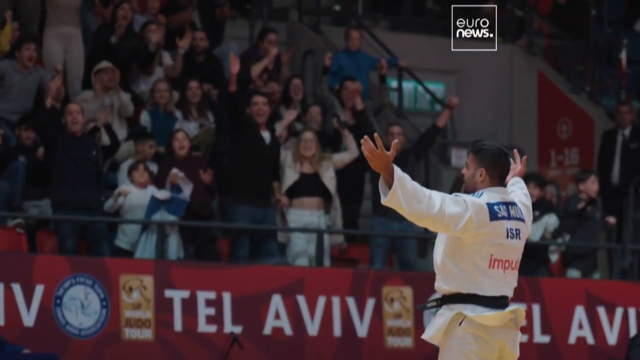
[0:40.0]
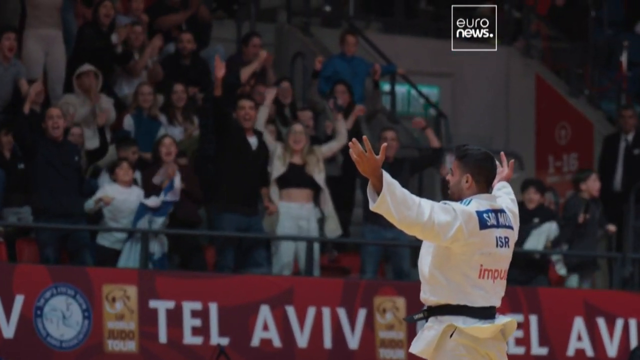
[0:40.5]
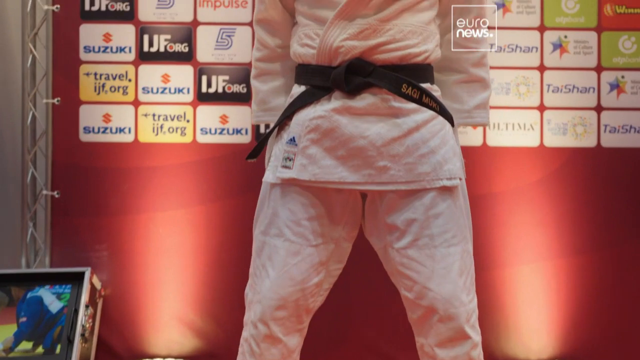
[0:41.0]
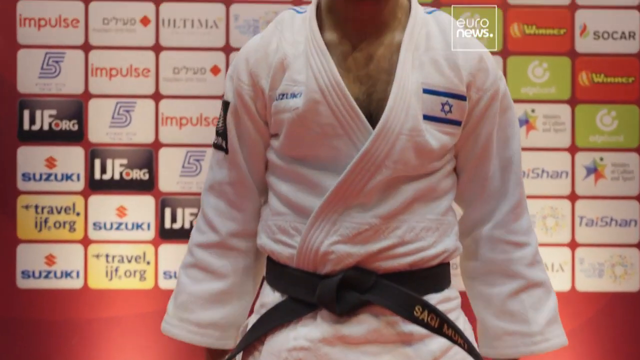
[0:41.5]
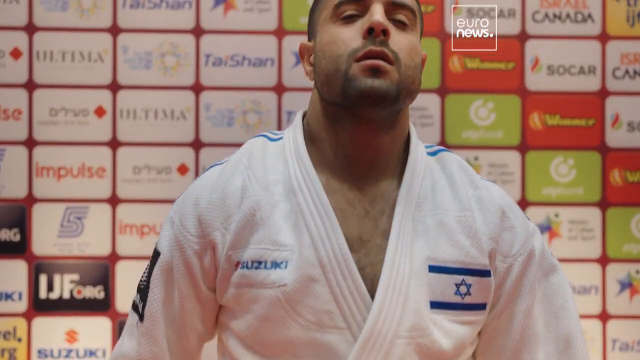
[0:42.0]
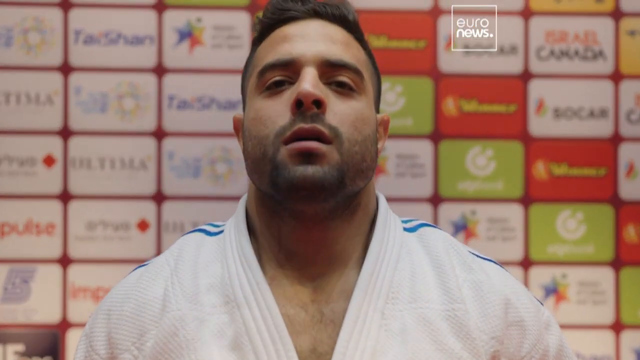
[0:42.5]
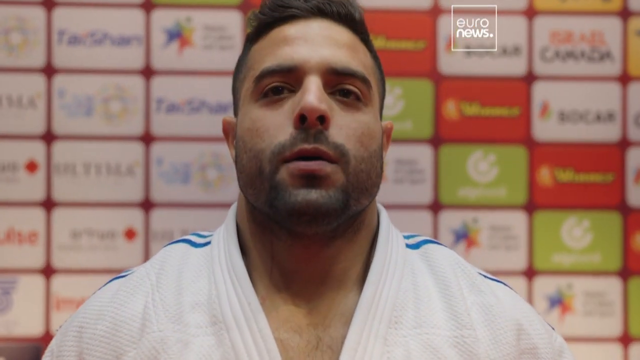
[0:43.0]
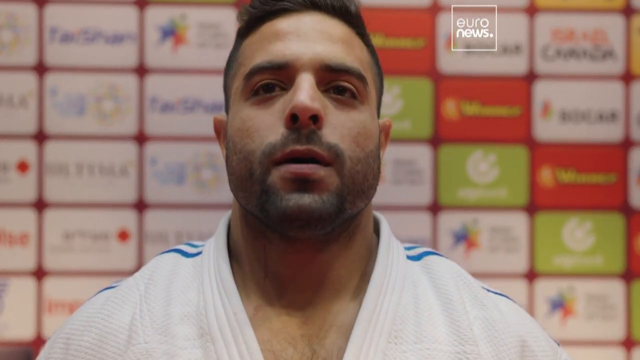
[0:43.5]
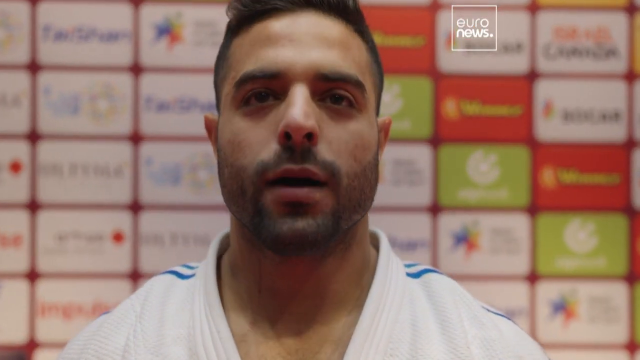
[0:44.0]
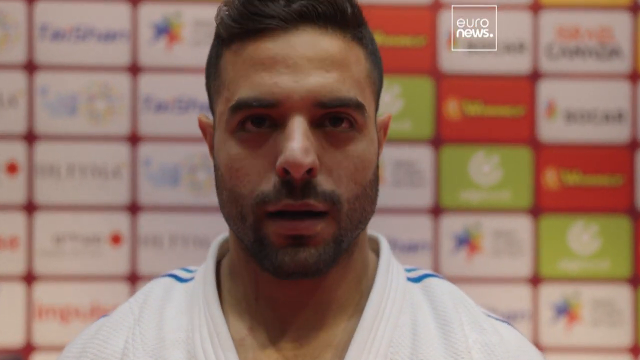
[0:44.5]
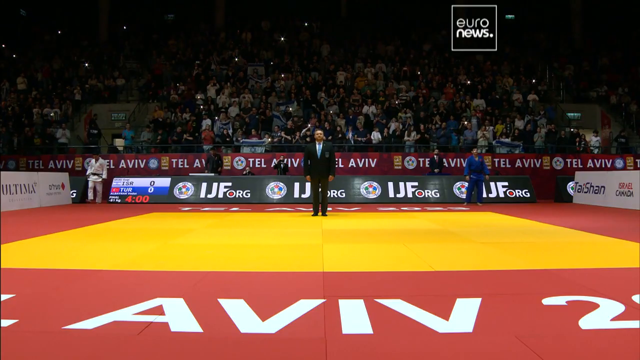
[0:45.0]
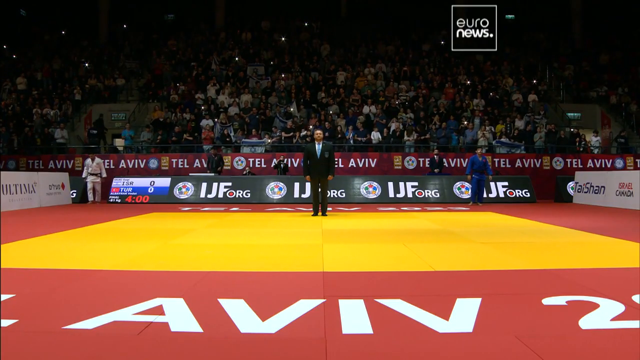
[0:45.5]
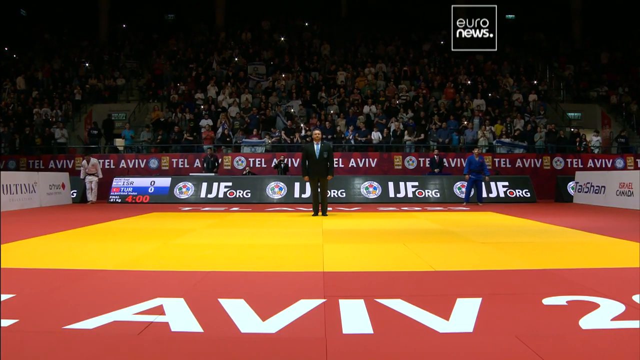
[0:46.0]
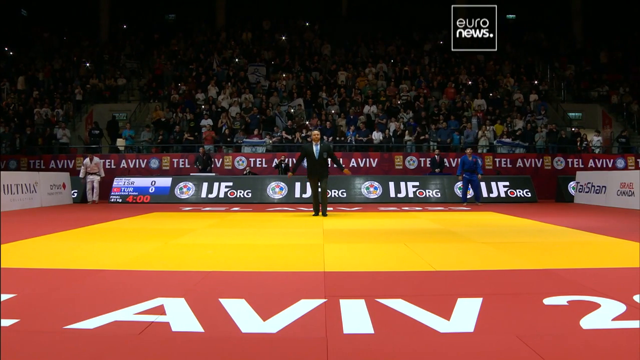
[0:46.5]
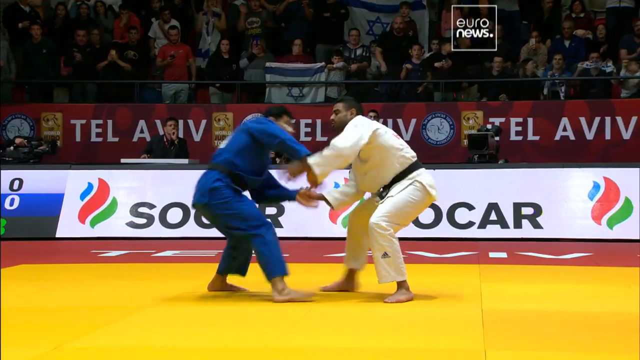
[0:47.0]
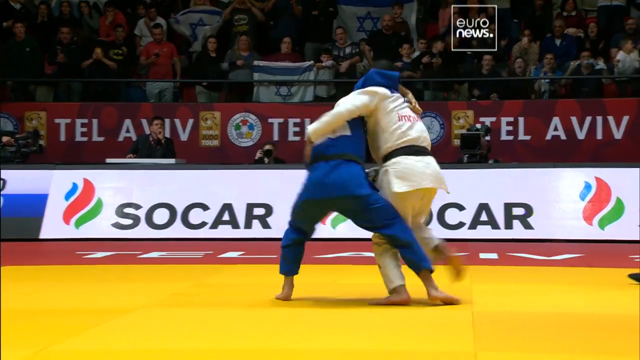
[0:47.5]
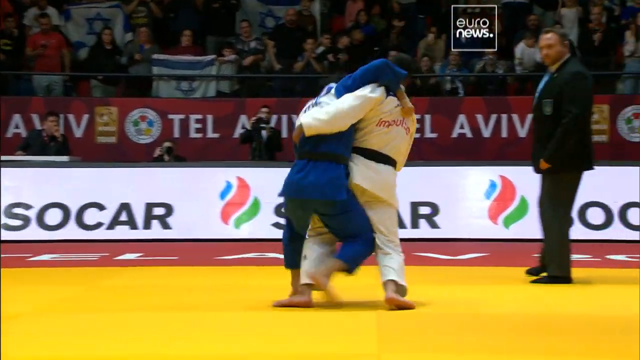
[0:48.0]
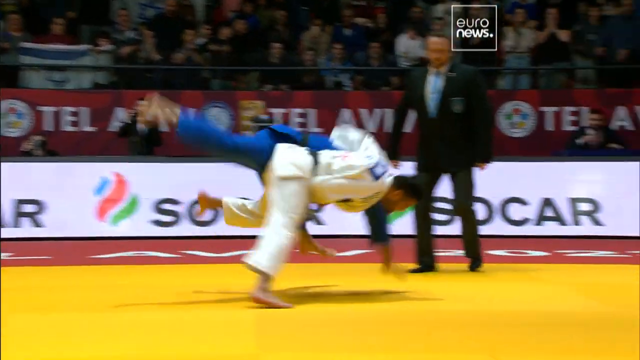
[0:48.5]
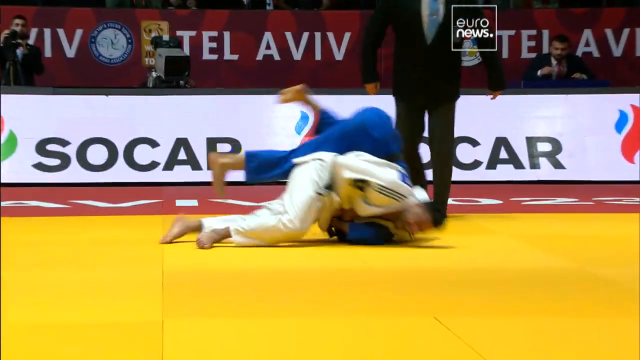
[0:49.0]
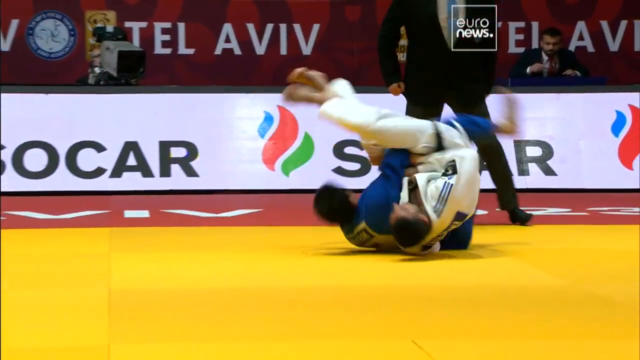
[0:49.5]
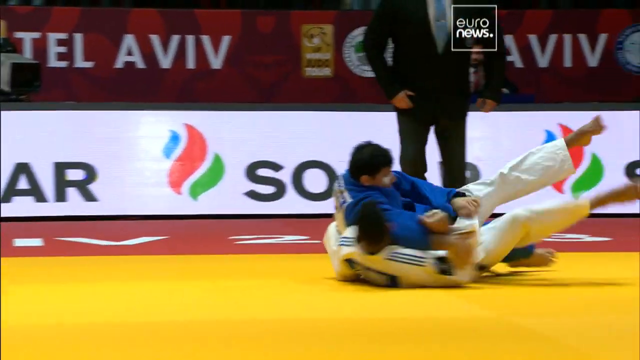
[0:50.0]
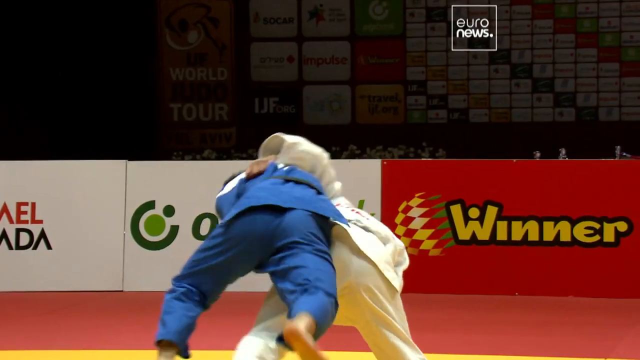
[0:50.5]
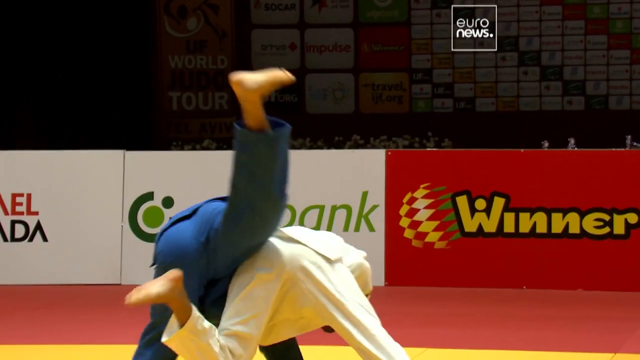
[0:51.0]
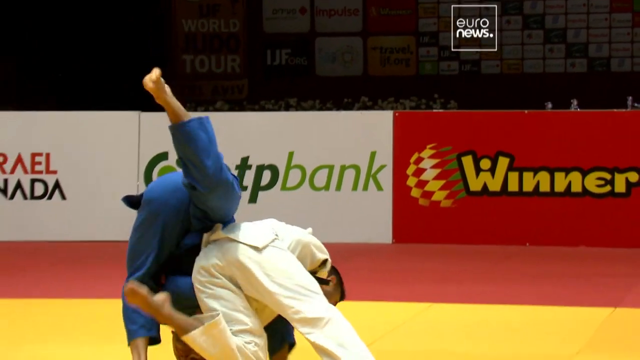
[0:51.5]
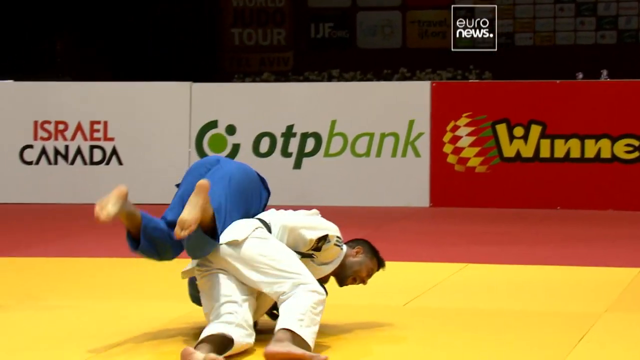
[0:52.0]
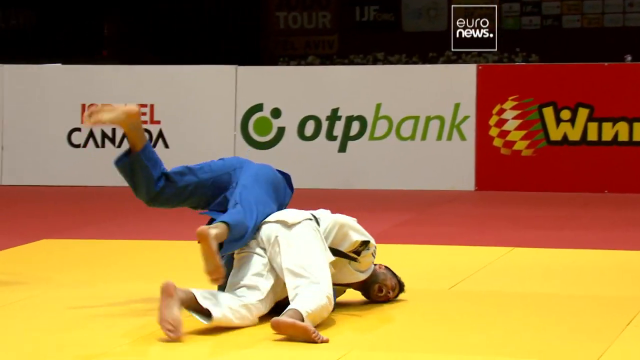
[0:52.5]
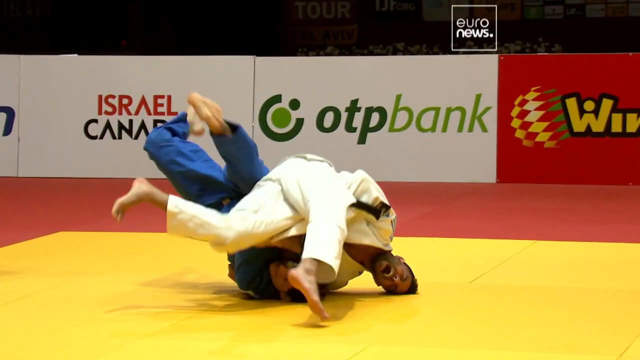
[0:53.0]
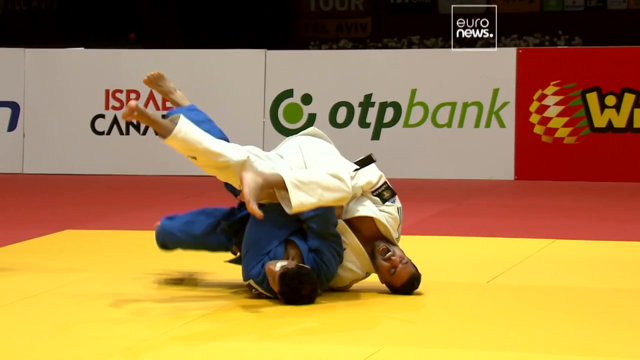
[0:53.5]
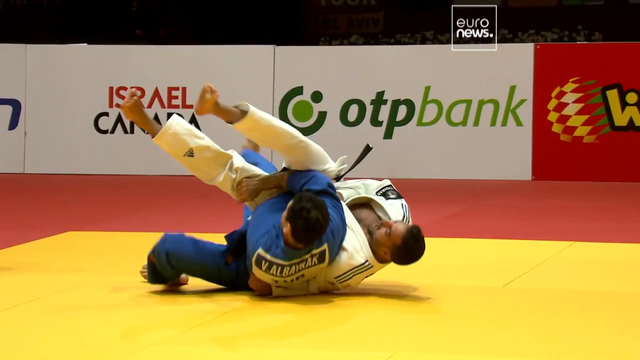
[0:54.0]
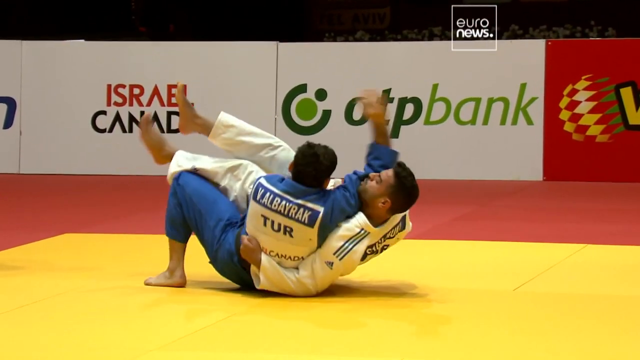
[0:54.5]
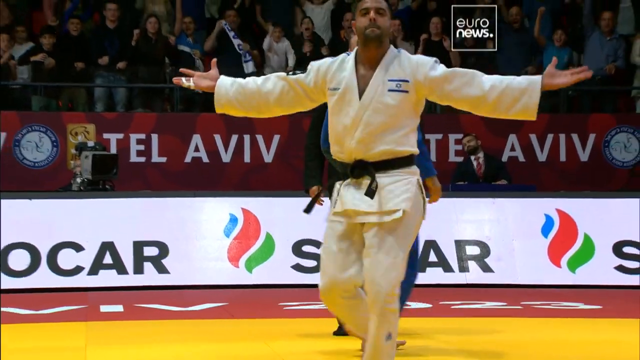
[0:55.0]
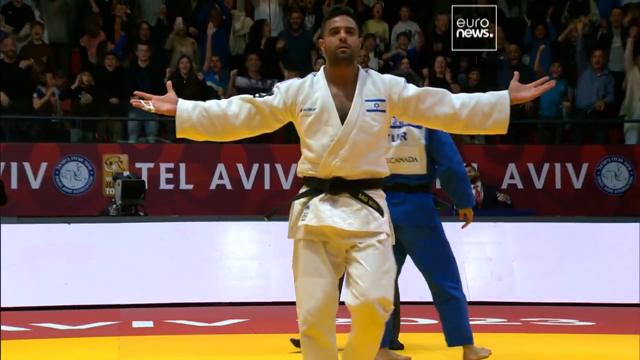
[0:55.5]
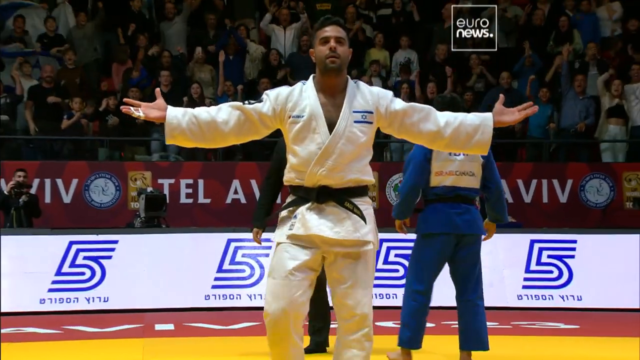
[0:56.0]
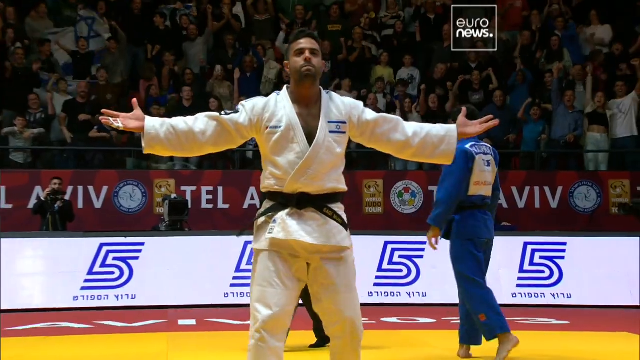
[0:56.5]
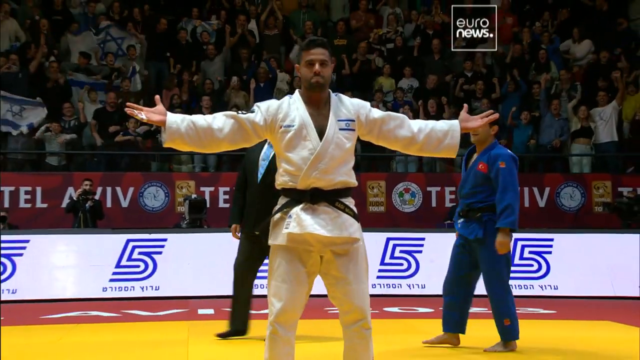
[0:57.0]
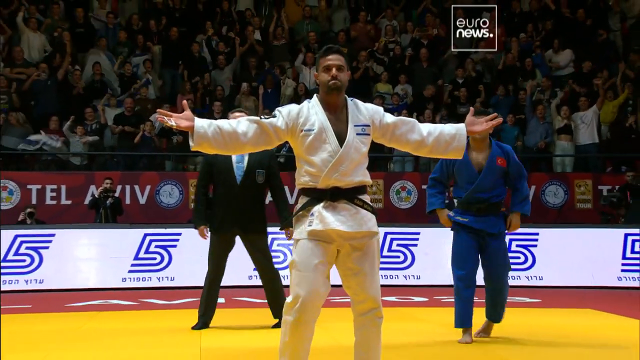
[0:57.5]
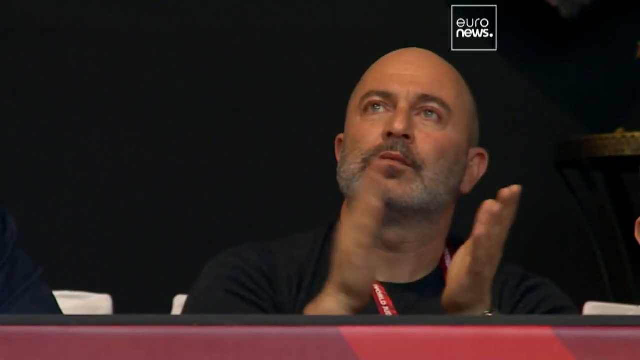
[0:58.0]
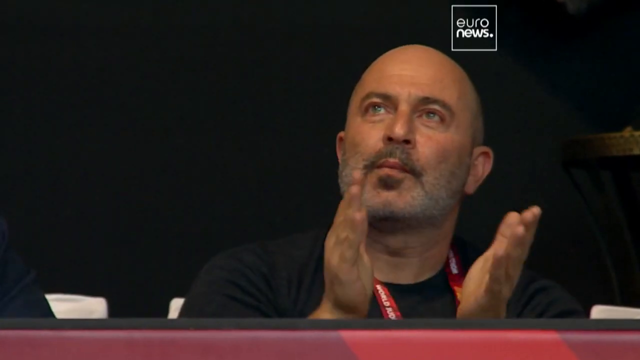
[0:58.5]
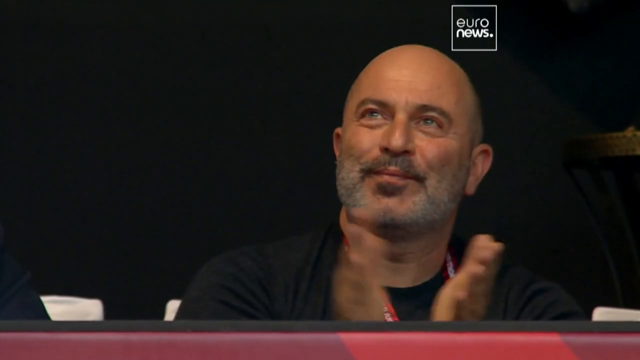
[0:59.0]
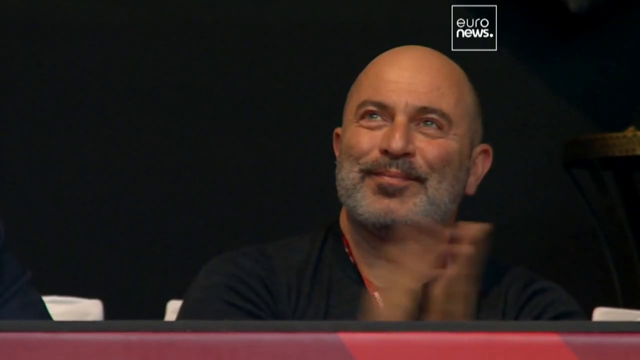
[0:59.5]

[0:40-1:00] The Israeli fighter celebrates with his arms in the air. The video cuts to a zoomed-in promotional shot of him that zooms out and then zooms in on his face in slow motion; he has a somewhat crooked nose, and the view looks up at his misshapen nostrils. It cuts back to the stadium floor, where "Aviv" is written on a yellow square within a red floor. Scenes of him fighting follow: he throws a different opponent, apparently from Turkey with "TUR" on his back, to the ground and puts his arms up in the air. A man in the crowd, possibly his coach or someone important, is bald with white and brown stubble on his face and is clapping and smiling. The sport appears to be judo, with clips from different fights showing him throwing people to the ground.